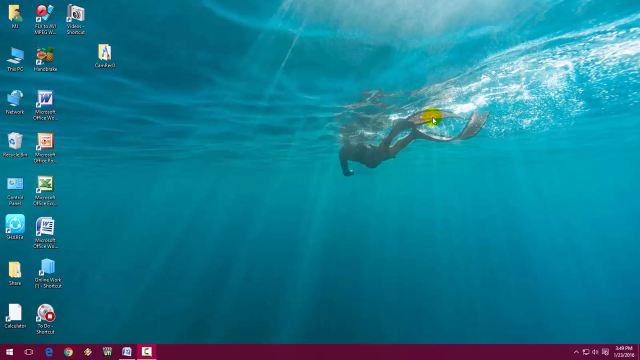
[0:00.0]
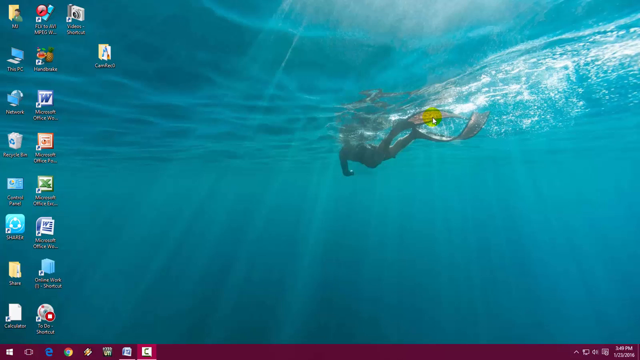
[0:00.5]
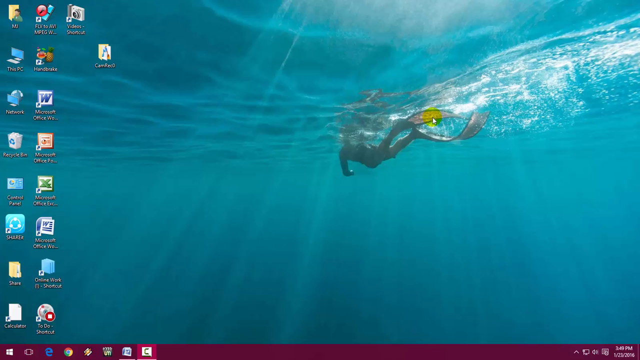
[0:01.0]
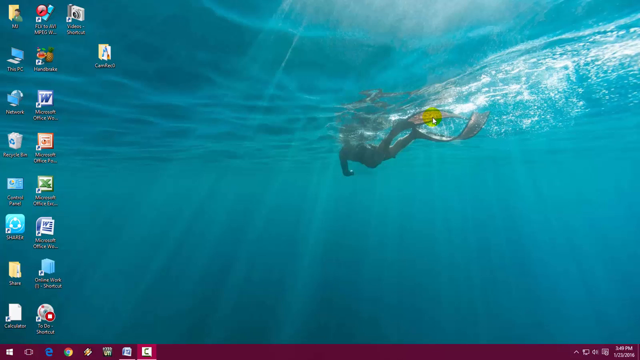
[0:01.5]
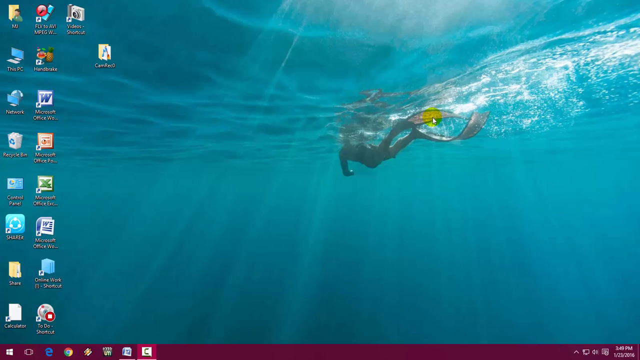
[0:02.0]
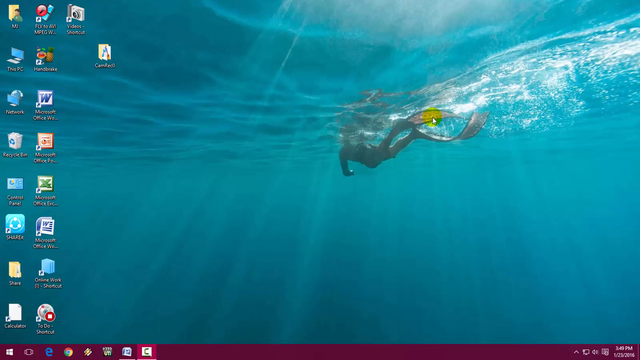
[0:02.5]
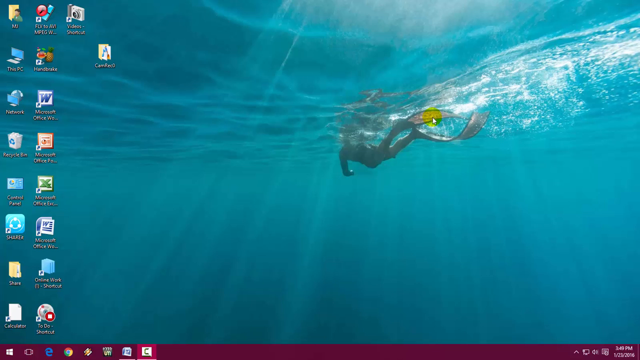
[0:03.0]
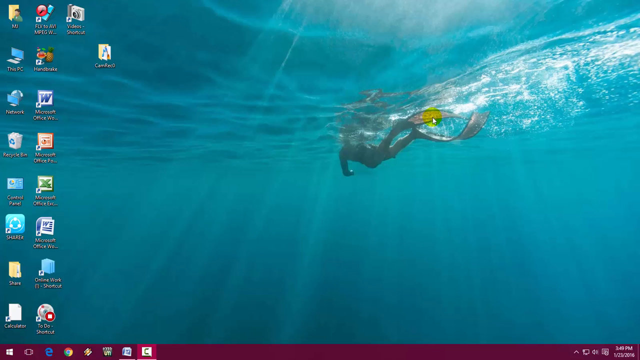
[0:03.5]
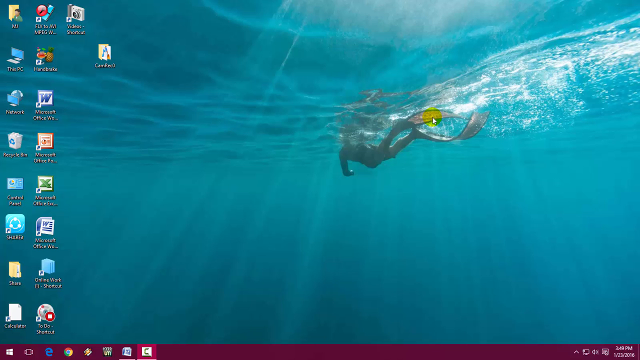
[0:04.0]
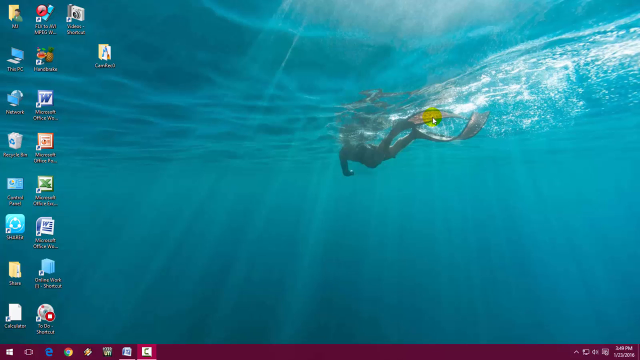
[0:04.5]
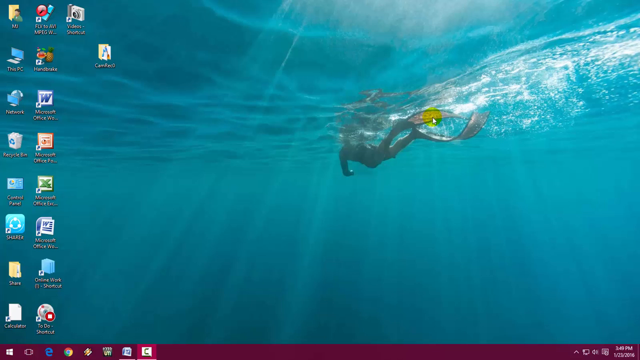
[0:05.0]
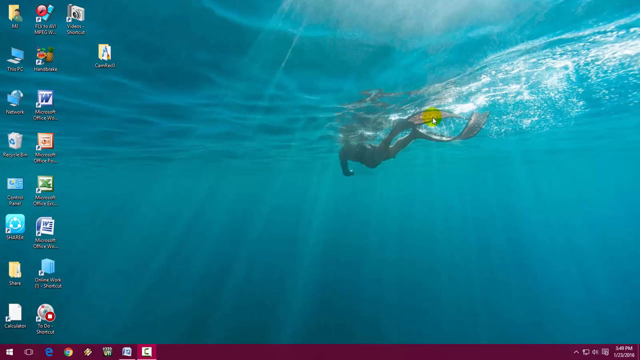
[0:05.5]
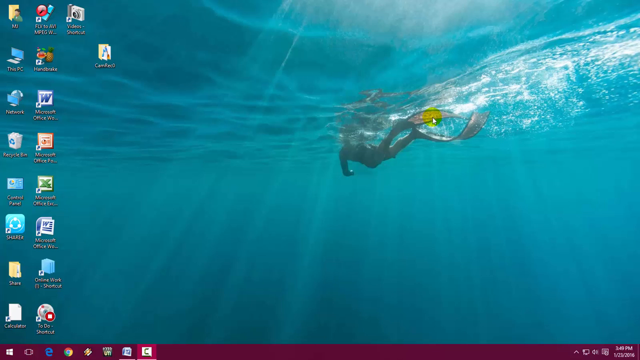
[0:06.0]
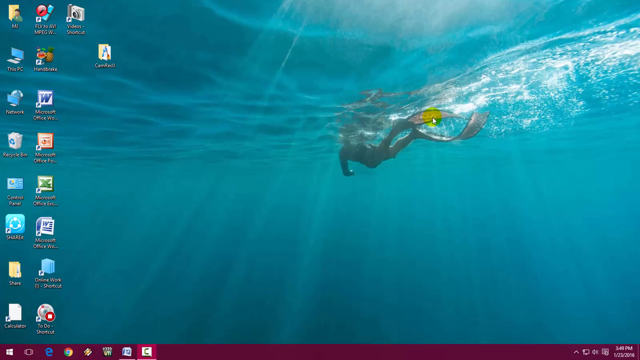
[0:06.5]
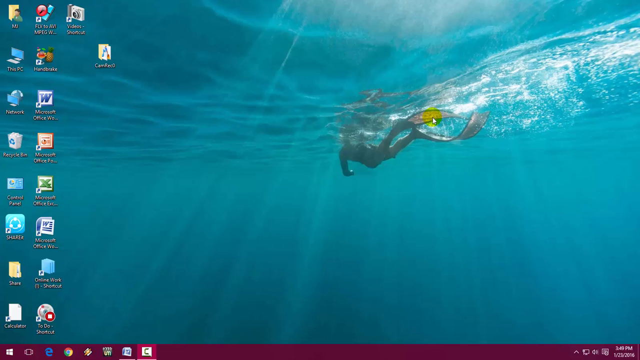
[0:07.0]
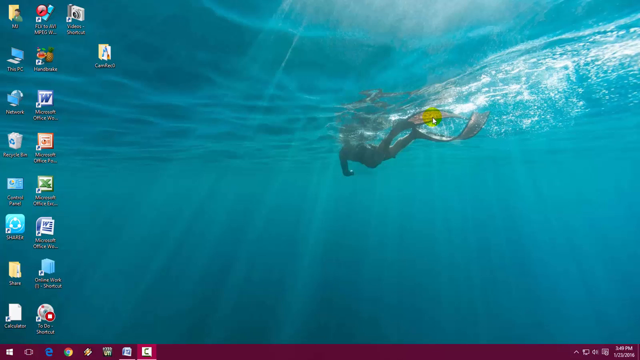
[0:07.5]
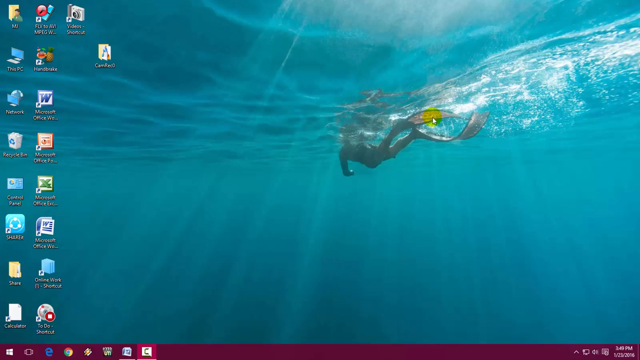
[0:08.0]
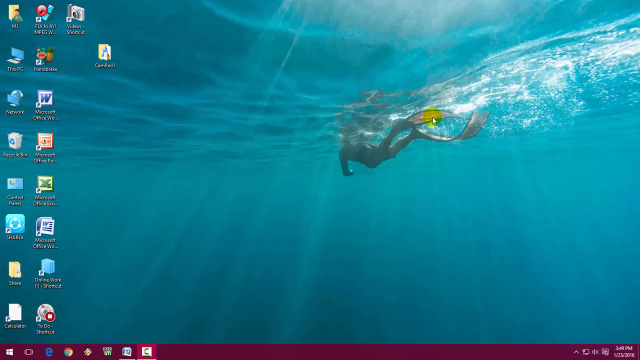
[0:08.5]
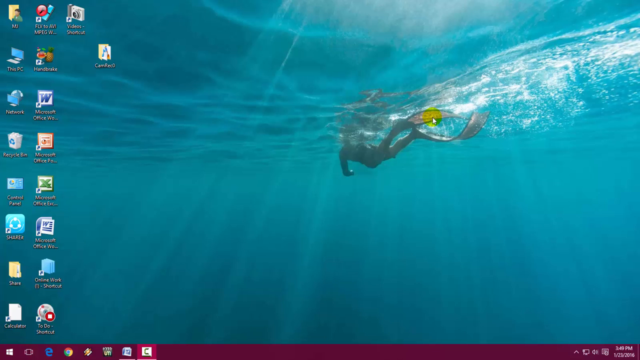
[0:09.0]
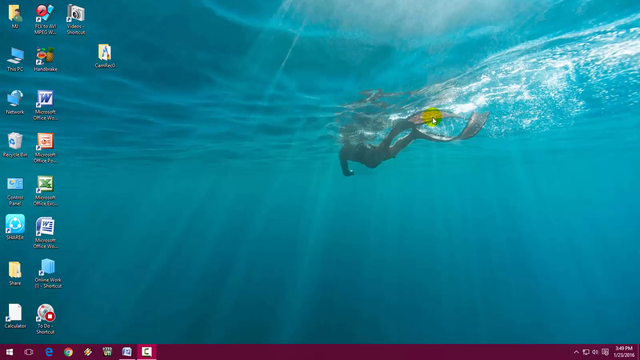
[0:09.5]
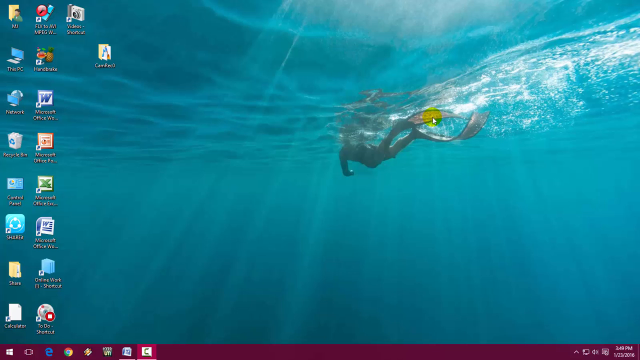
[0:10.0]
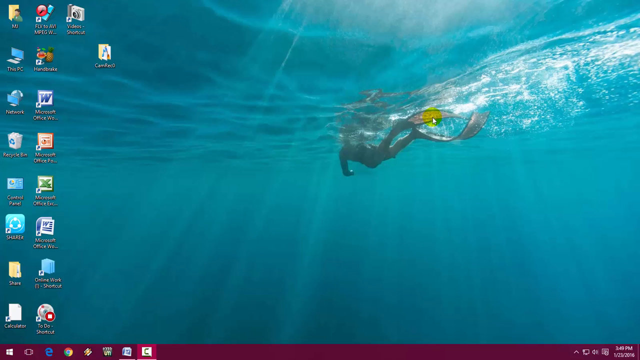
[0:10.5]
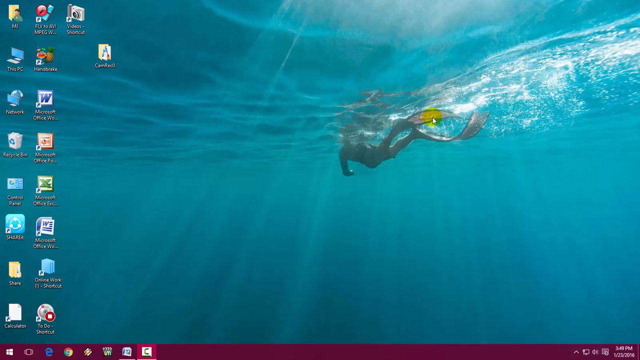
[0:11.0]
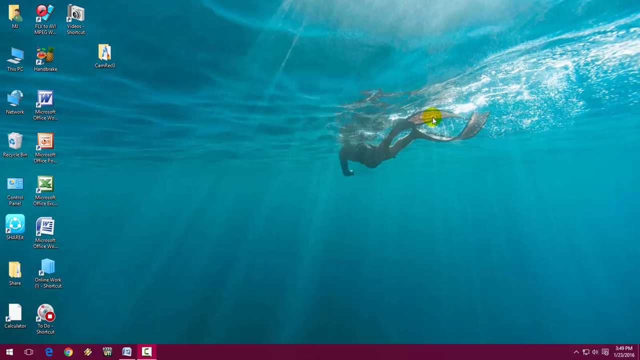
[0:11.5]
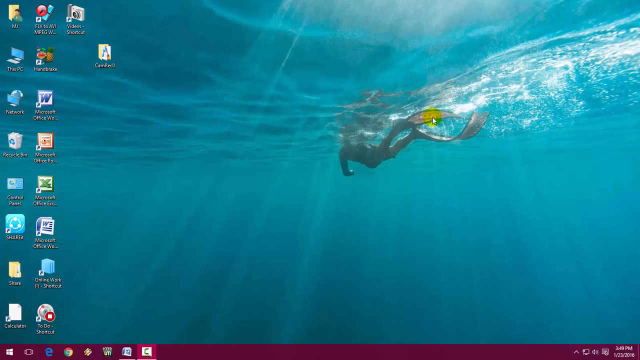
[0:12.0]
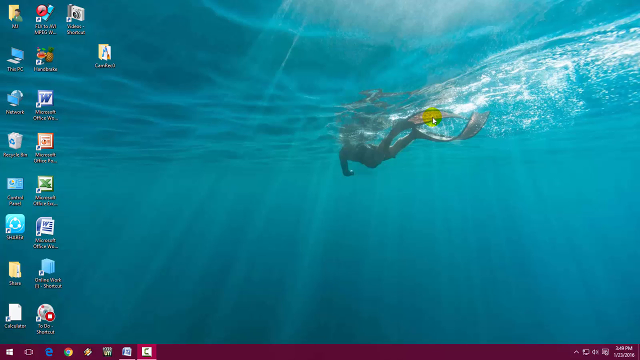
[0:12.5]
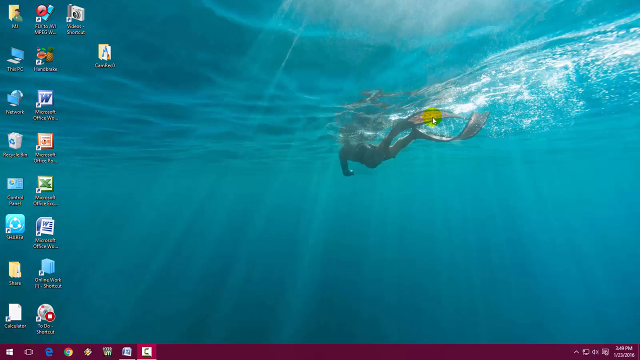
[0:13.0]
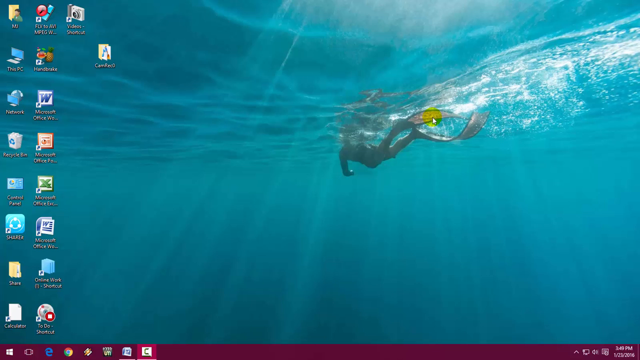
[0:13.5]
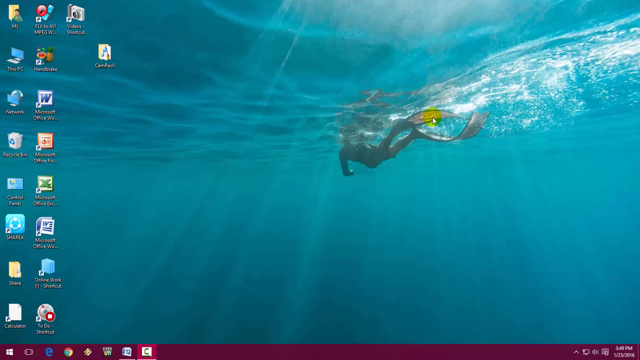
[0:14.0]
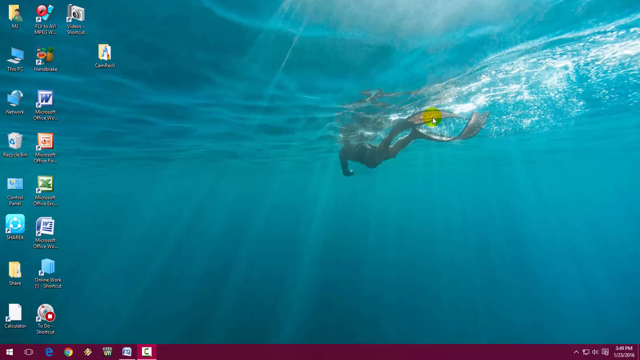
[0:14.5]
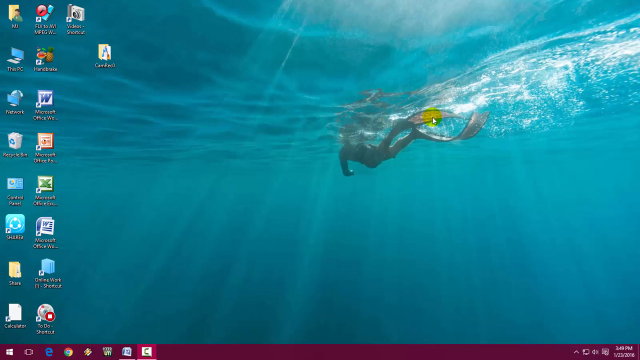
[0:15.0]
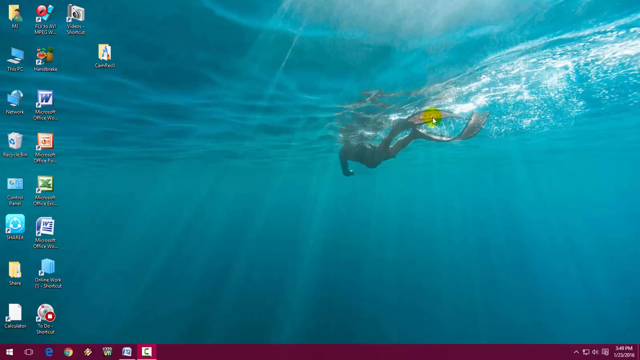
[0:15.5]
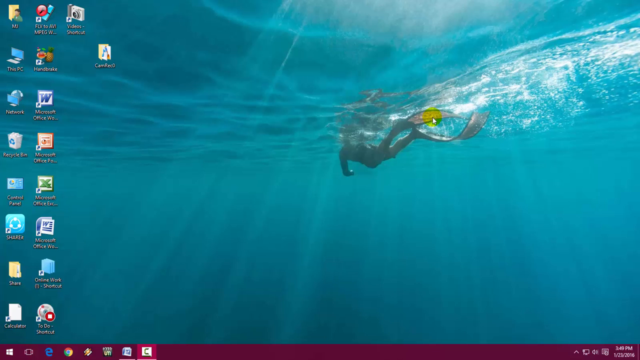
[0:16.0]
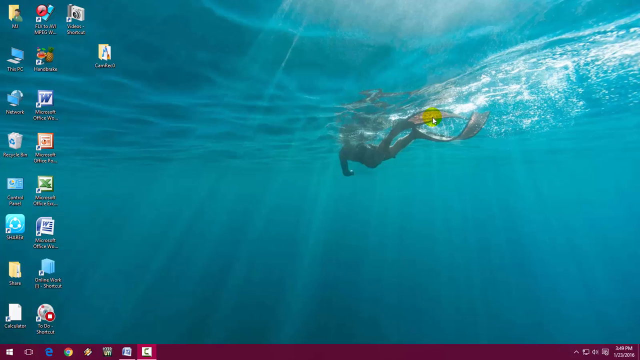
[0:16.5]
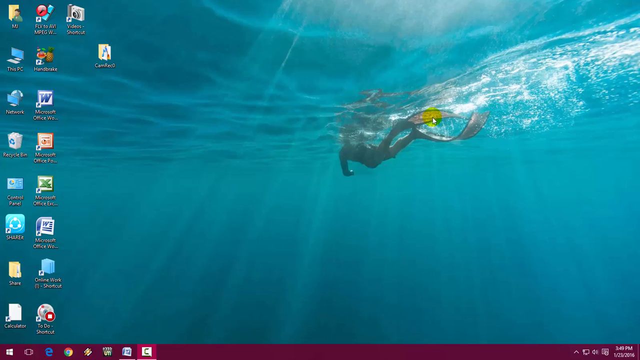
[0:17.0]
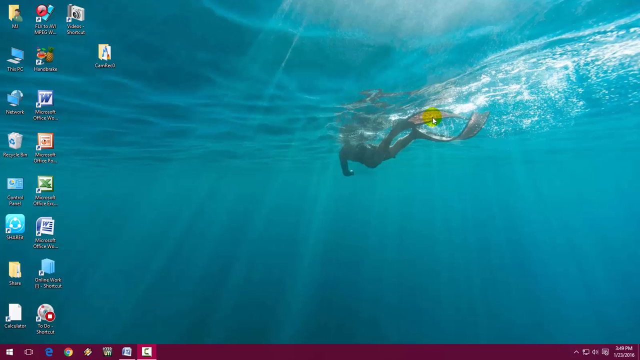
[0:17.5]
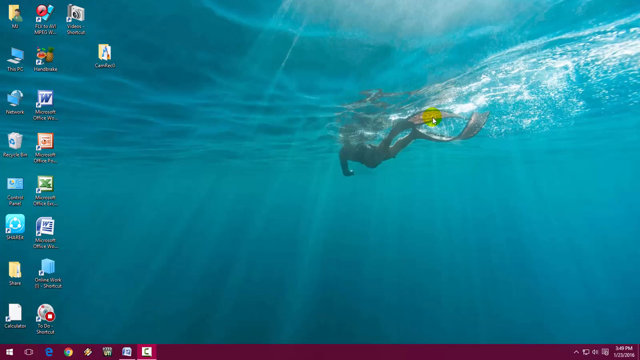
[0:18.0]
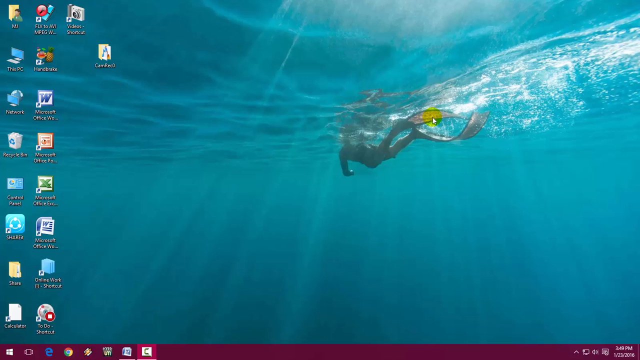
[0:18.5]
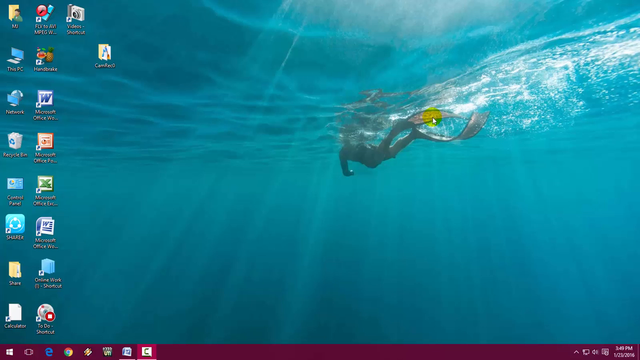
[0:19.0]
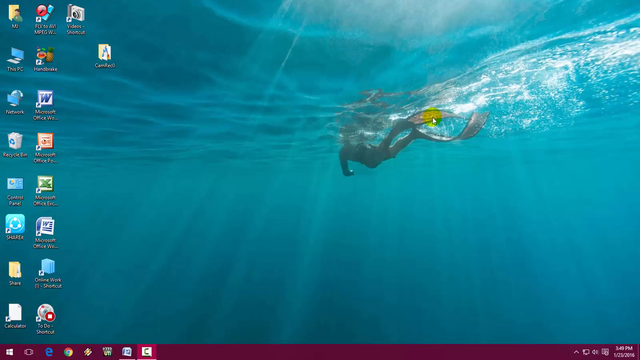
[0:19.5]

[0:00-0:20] A computer desktop is shown with many programs made specifically for video production, along with Office programs such as Word, PowerPoint and Excel. Many files are on the desktop, some in folders and others scattered around it. The desktop background shows a diver in clear waters with a snorkel and diving gear. Several applications are open, specifically Word and possibly a screen recorder. The video appears to be some kind of tutorial.